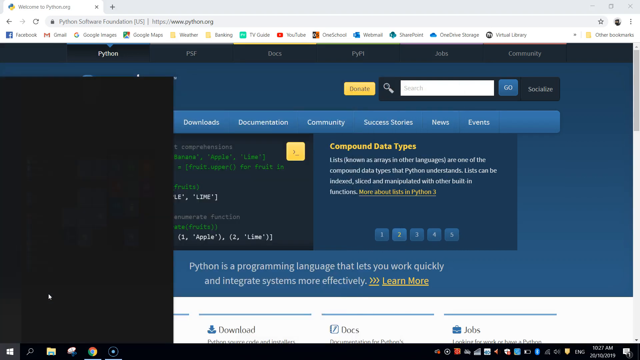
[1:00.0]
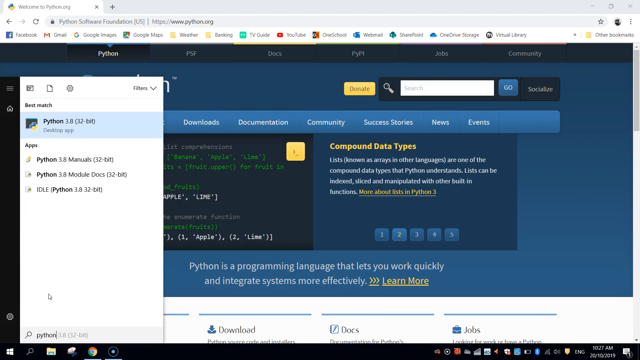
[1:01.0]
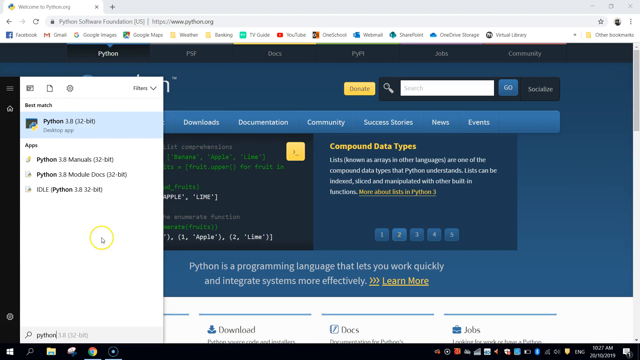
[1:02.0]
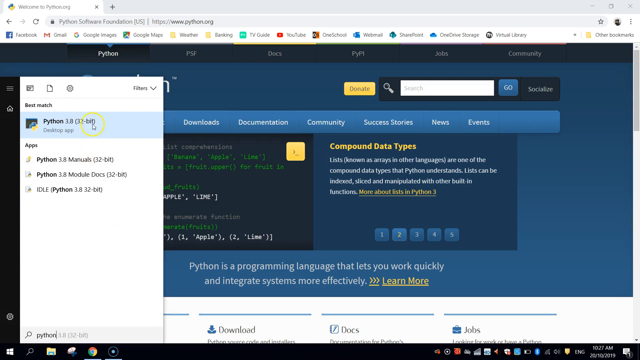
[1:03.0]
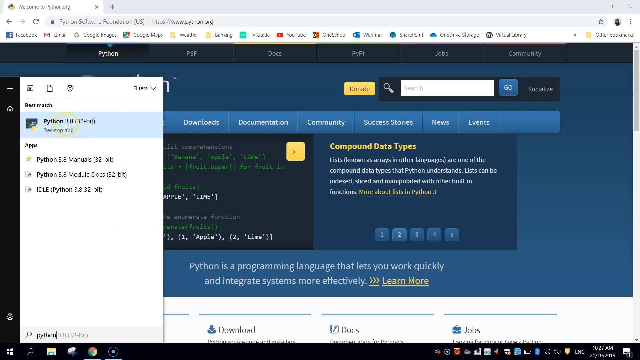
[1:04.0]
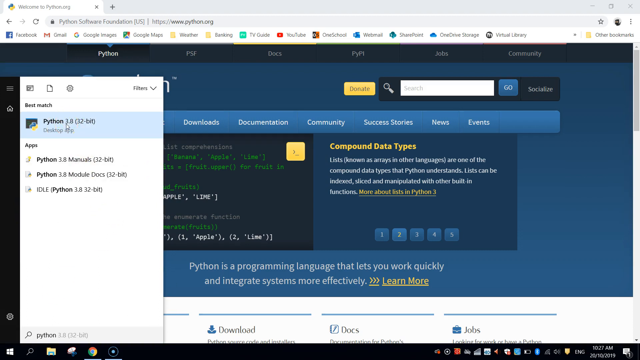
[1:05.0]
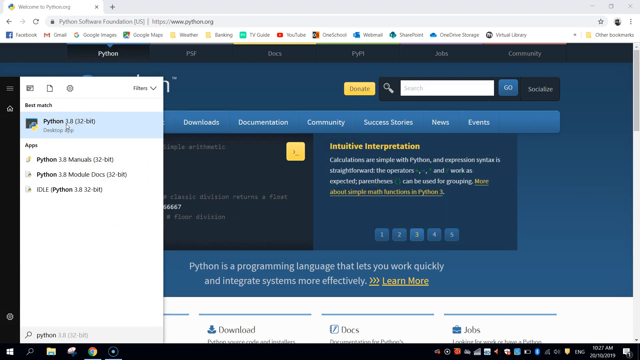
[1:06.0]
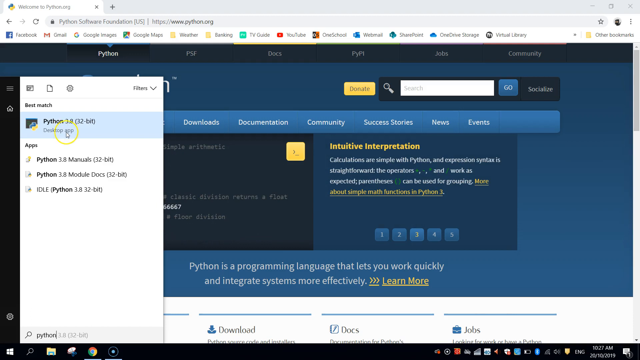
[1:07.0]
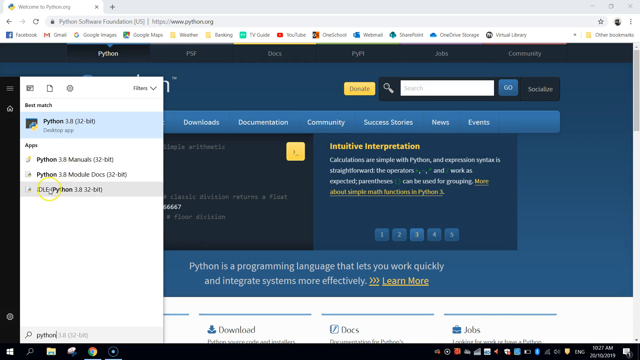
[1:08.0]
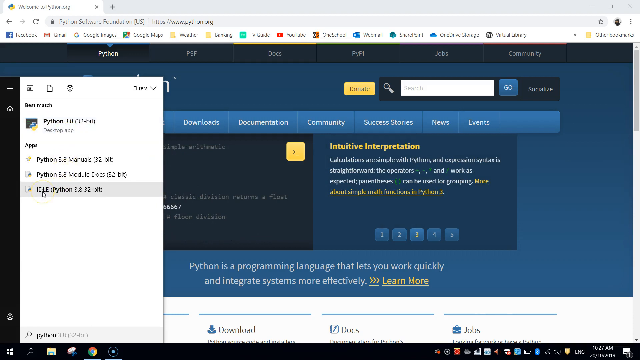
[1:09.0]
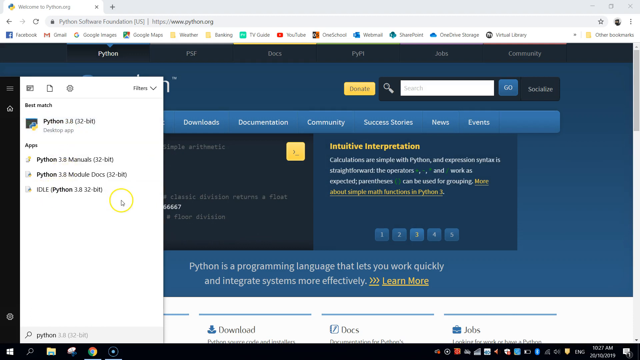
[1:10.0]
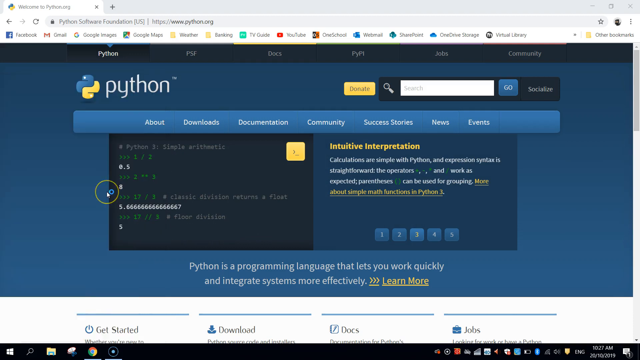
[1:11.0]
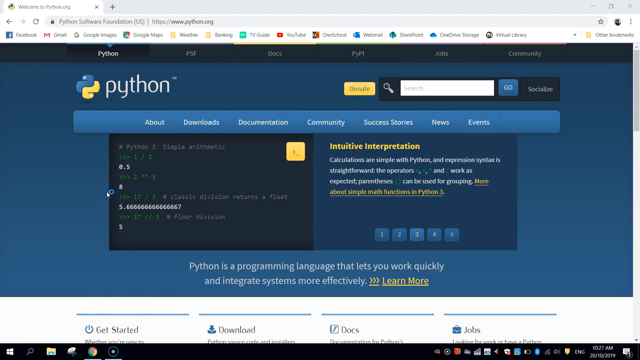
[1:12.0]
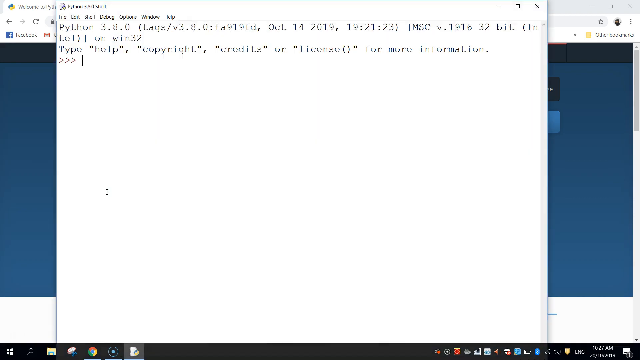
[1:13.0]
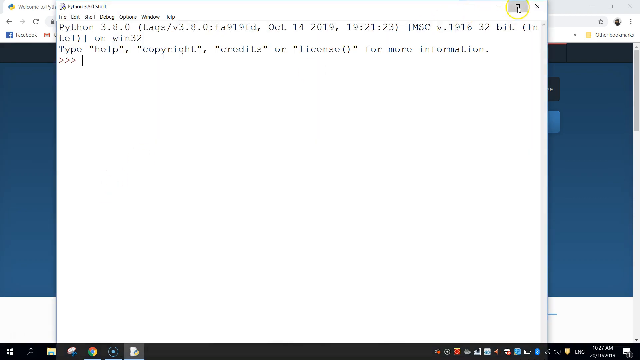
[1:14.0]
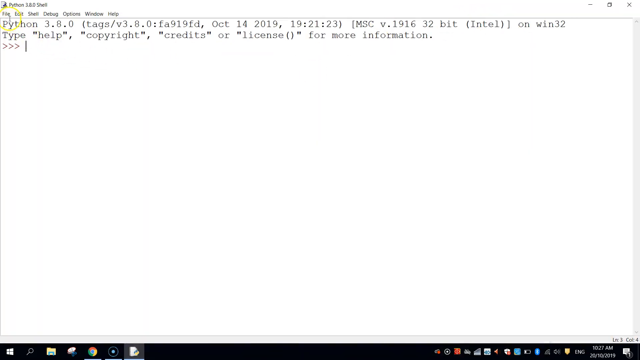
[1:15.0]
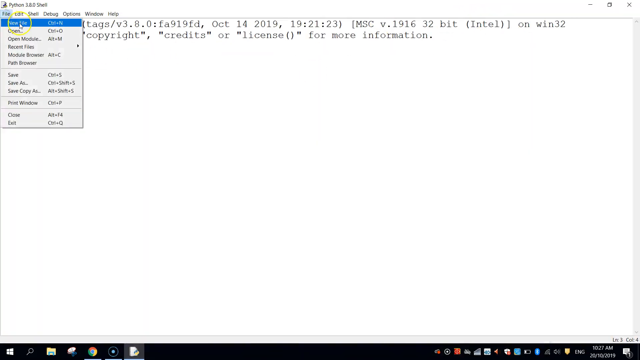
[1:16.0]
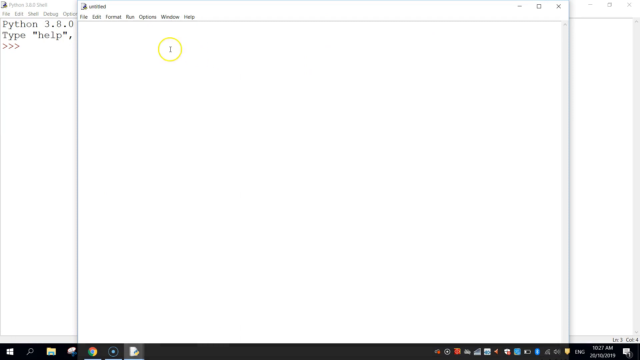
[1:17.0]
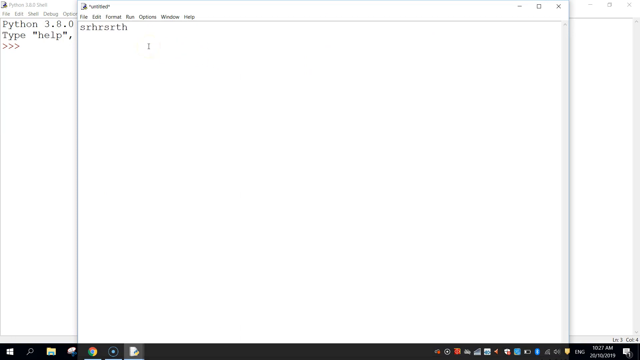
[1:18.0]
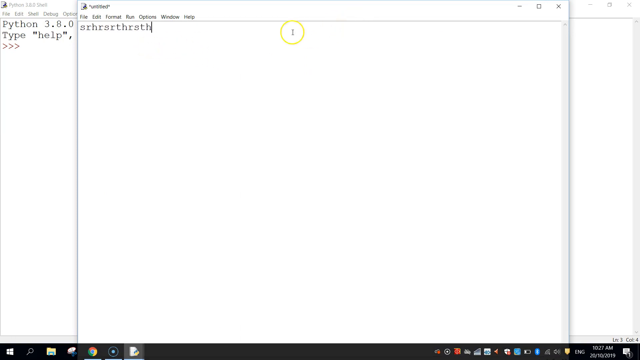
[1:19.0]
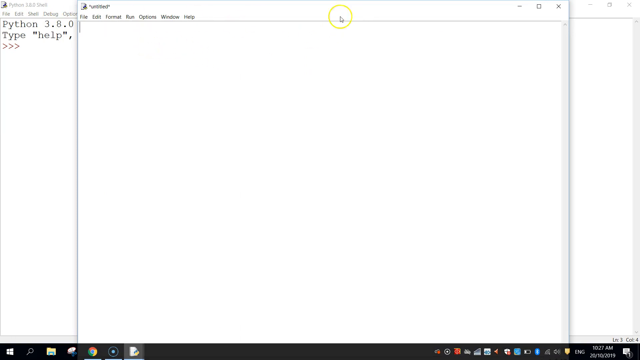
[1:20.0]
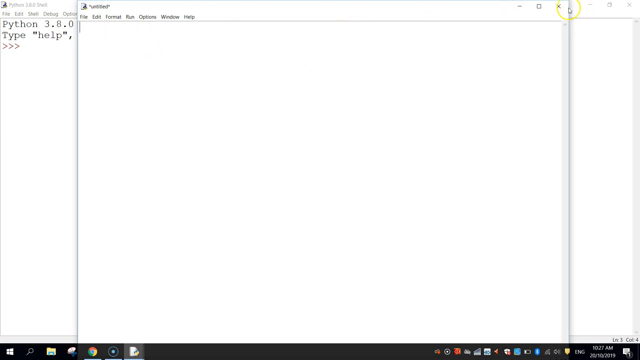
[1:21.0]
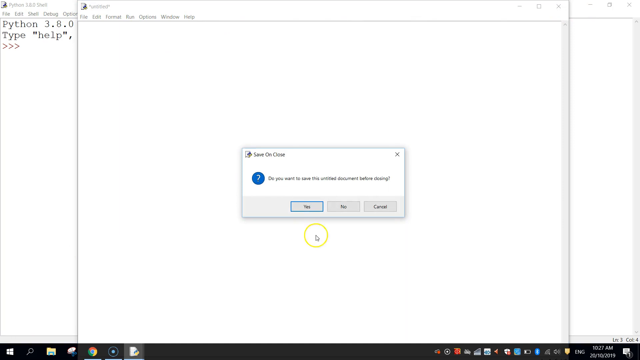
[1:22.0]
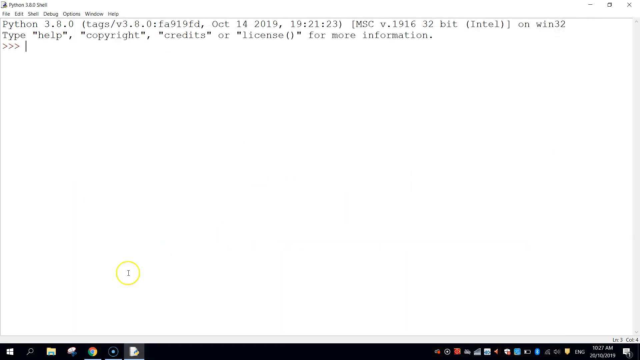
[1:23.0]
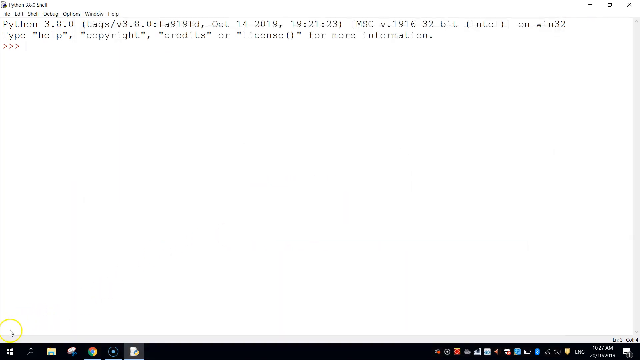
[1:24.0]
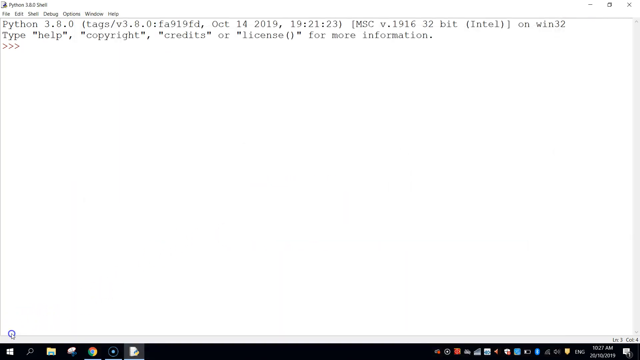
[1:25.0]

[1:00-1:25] In the Windows start menu, the user clicks the search bar and searches for Python, and four options come up, the first being best match Python 3.8. The user moves the cursor around this option without clicking it and proceeds to the apps, going over Python 3.8 manuals, Python 3.8 module docs, and idle Python. The user clicks this selection, and a new window pops up with a white text box containing text showing the Python version, the date, some licensing information, some credits, and some copyright information. The user clicks File at the top left of the window and then New File, which opens a new Python window. The user types random letters into the text box, highlights them and deletes them, then clicks X on the new window and clicks no to the option to save.